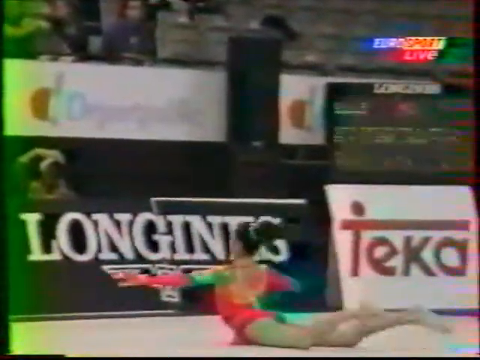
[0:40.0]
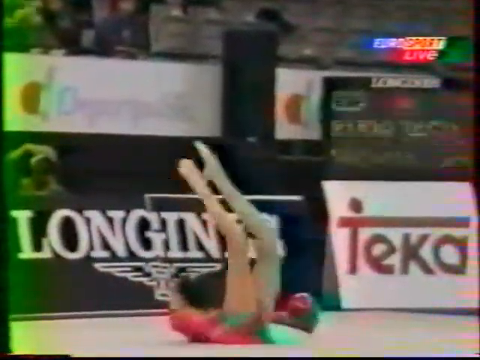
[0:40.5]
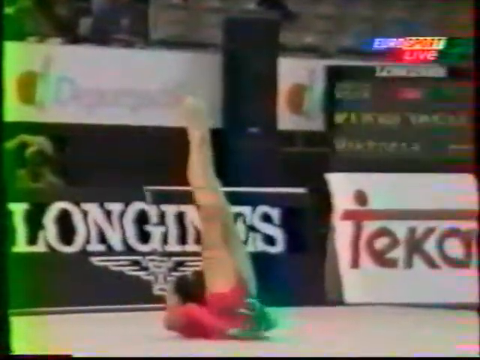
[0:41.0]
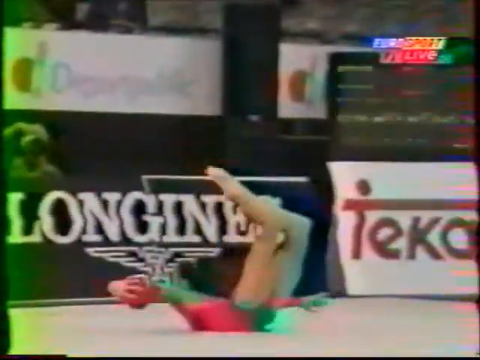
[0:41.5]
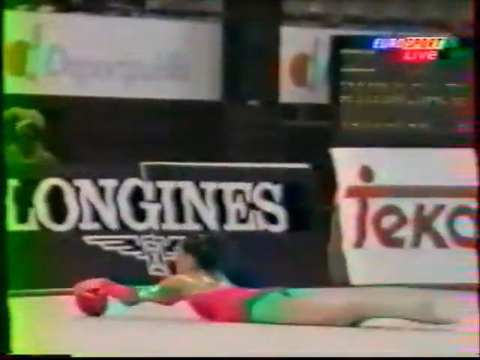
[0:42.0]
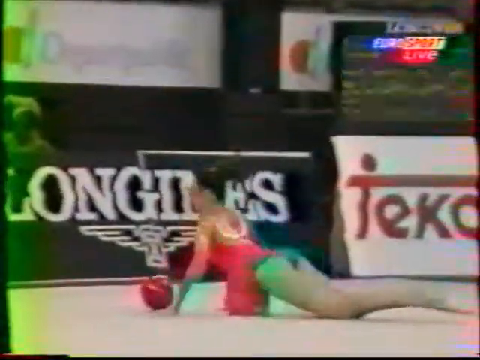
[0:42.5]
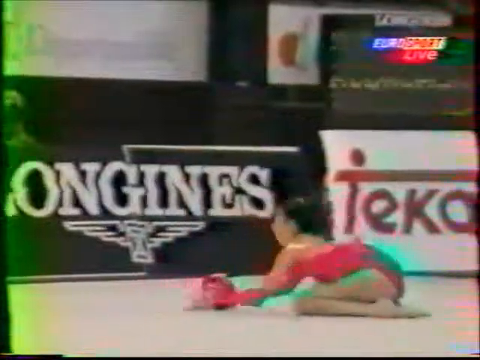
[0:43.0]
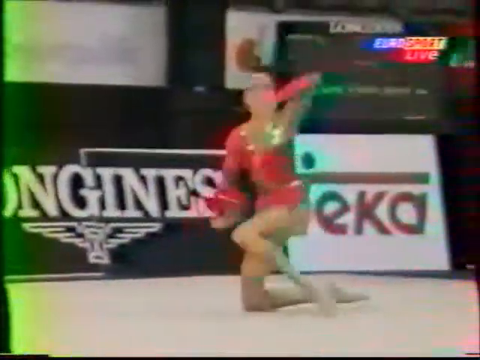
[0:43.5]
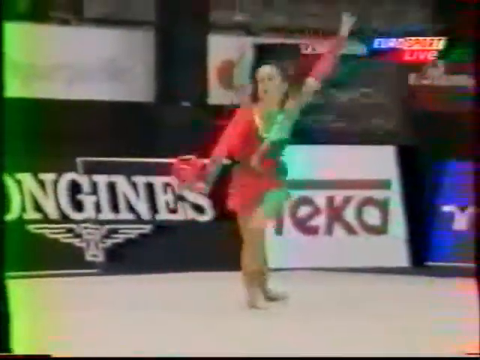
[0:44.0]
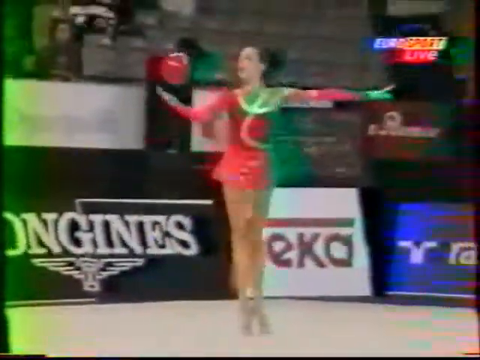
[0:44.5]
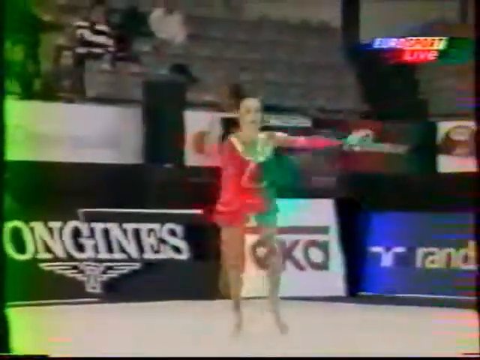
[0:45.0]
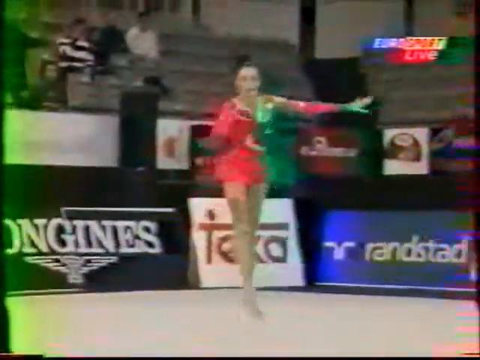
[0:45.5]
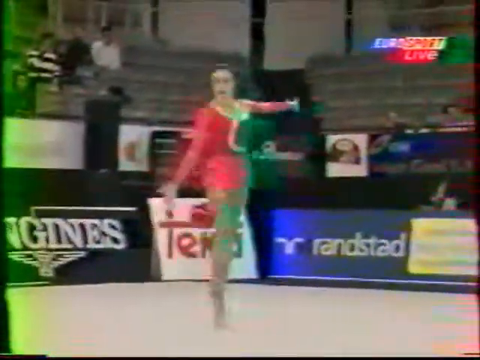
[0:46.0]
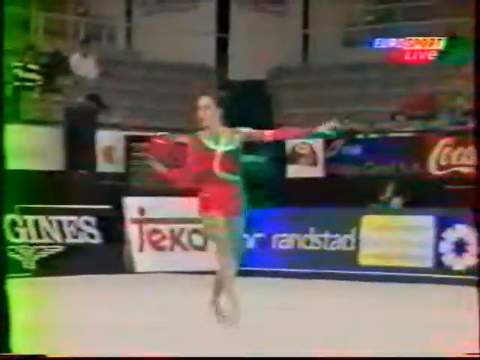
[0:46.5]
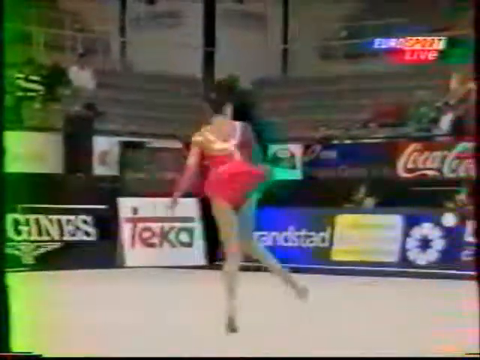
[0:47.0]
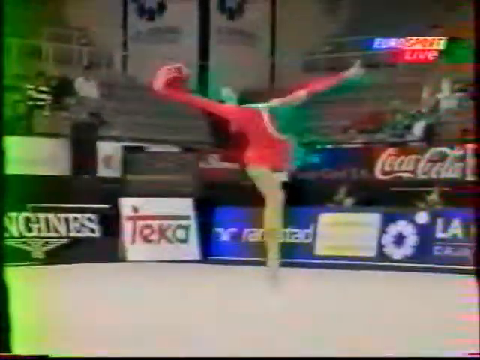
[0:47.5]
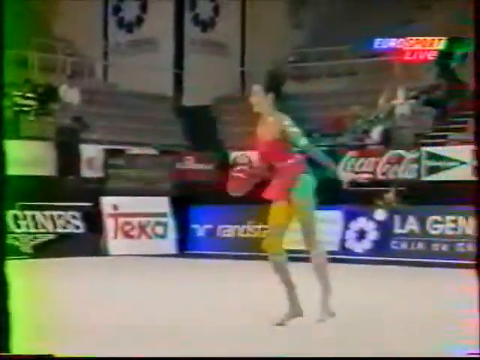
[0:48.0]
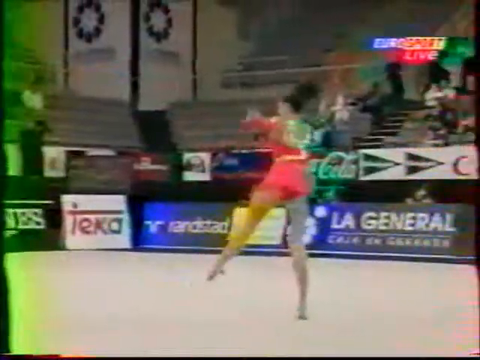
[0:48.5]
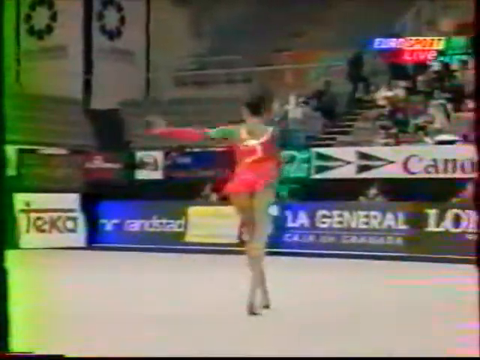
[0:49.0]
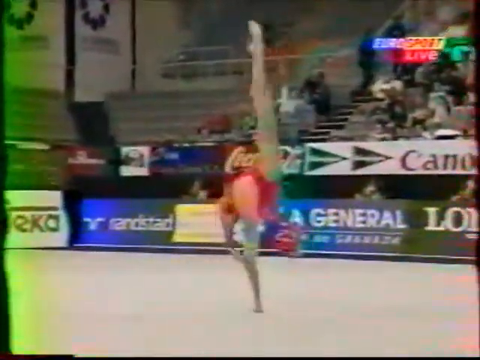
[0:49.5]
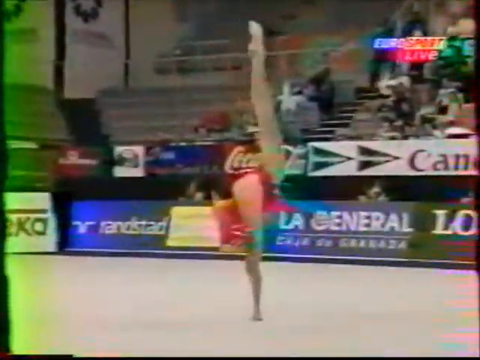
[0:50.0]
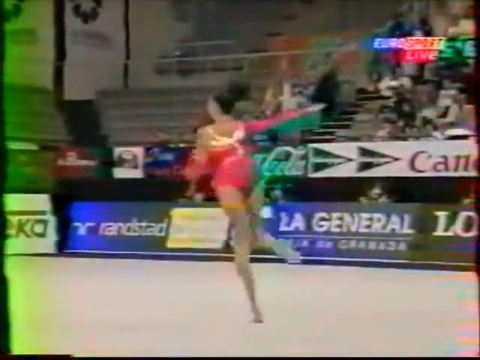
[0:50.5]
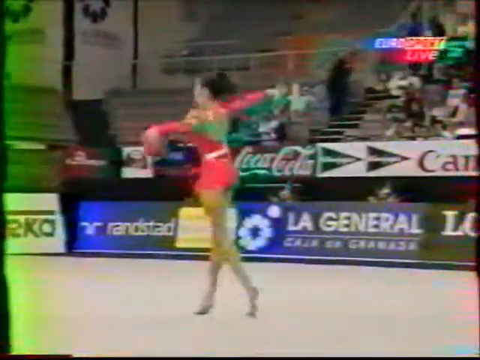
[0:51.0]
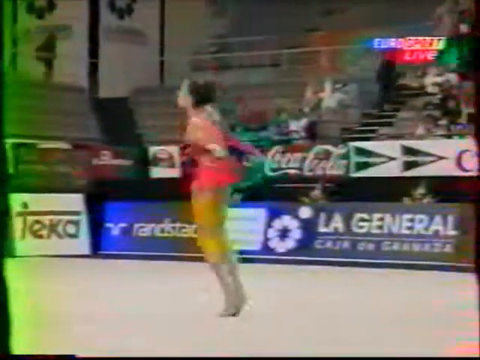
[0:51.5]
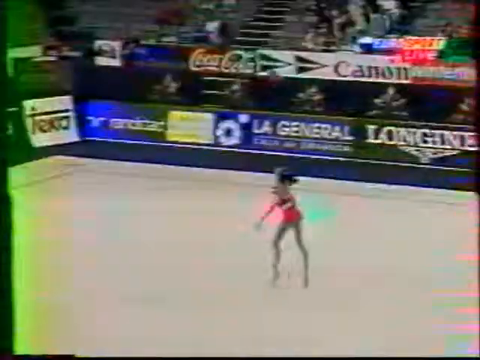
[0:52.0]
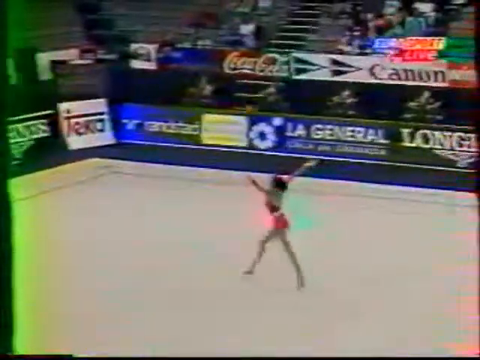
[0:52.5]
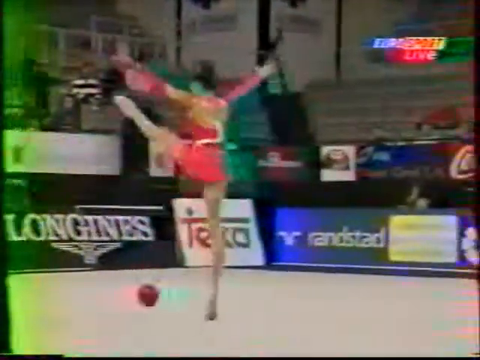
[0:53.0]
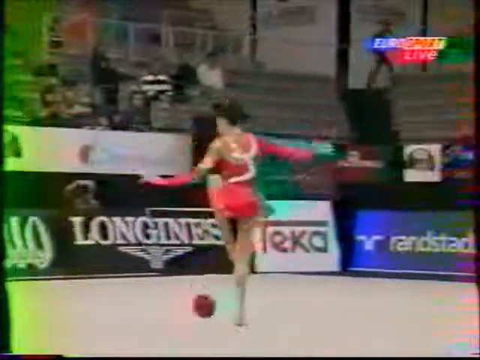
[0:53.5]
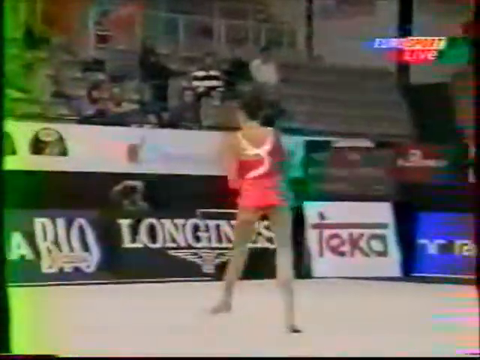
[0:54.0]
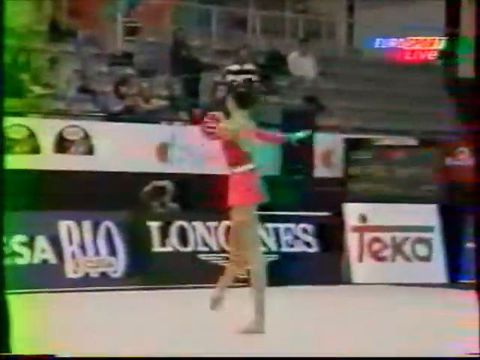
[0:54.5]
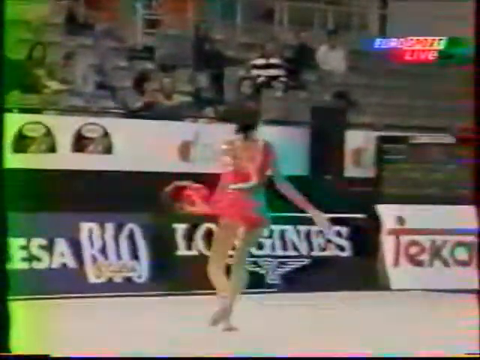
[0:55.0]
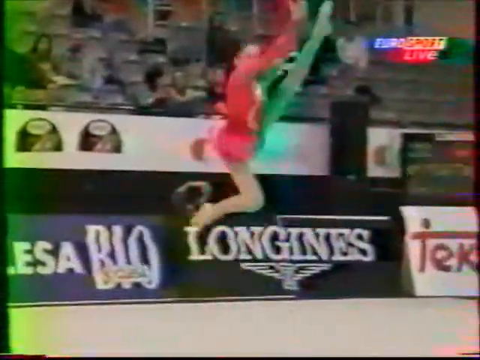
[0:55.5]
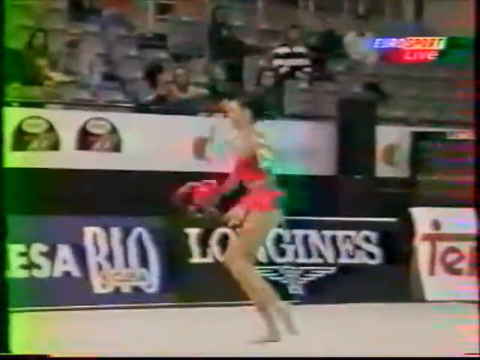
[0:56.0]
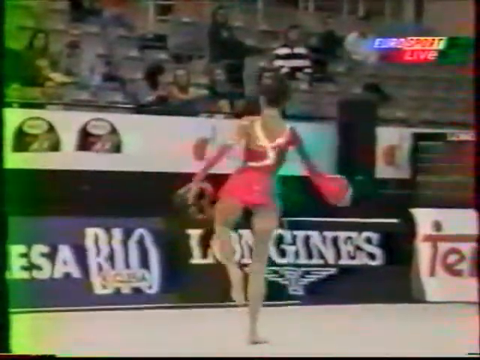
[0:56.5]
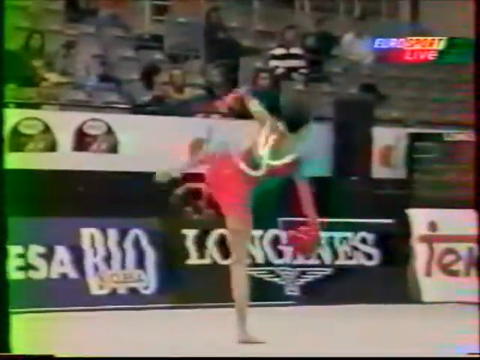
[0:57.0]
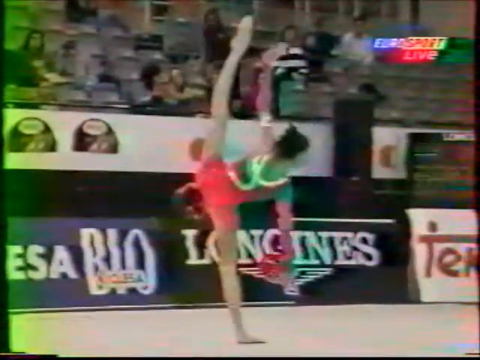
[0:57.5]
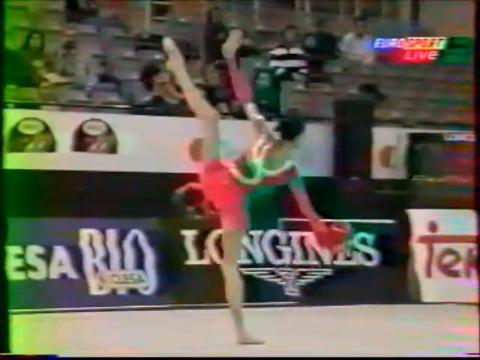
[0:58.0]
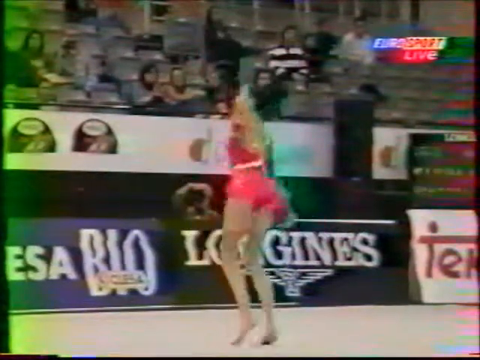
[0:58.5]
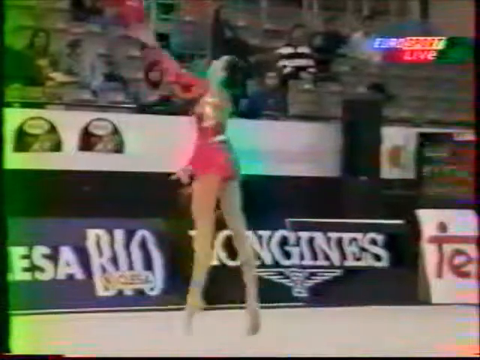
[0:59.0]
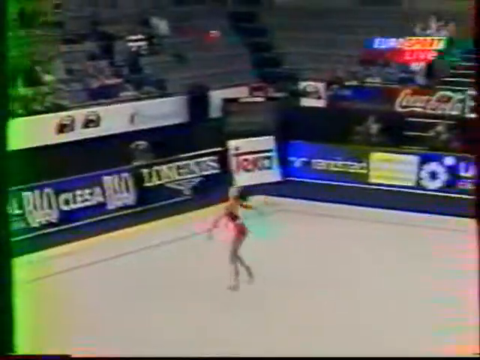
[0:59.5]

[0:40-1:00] A woman in a red outfit with black hair is on the floor holding a ball and moving it around her body. She slowly gets up, puts her hand in the air and starts moving forward. She bounces the ball, grabs it again and starts twirling and jumping around. She kicks one leg up in the air behind her, throws the ball over her head, puts her leg over the ball, hits it and grabs it again. She jumps up in the air, lifts her leg up in the air, throws the ball high and catches it. Advertisements are in the background, and a bunch of people in the stands are moving around and getting up, with a lot of empty seats. The video appears to be older, with a lot of grainy green textures. Eurosports Live appears in the top right corner.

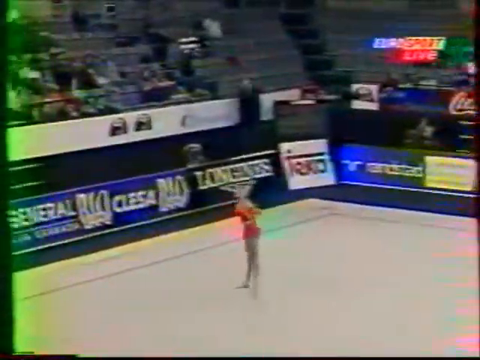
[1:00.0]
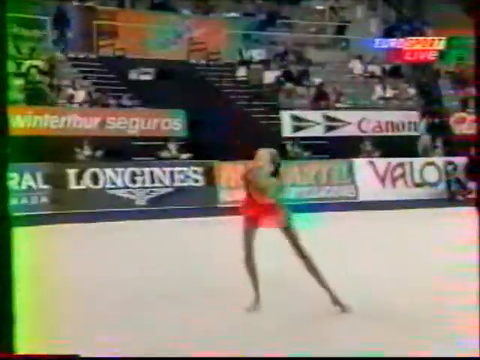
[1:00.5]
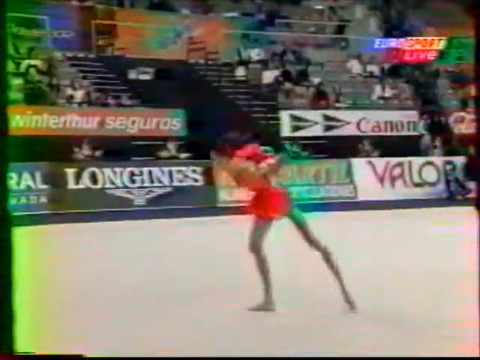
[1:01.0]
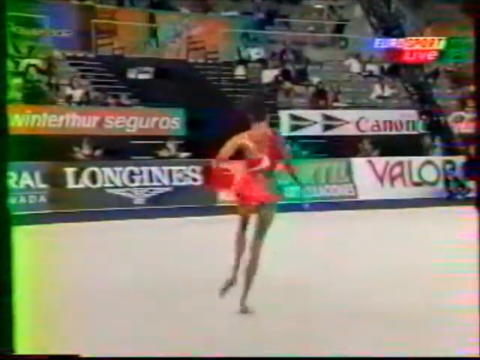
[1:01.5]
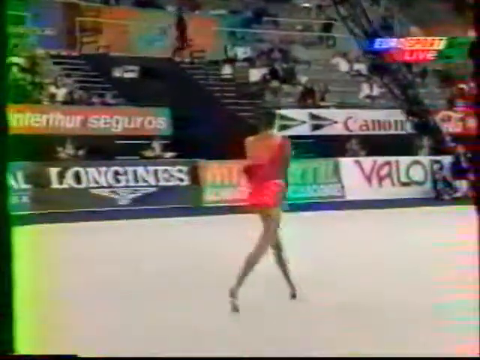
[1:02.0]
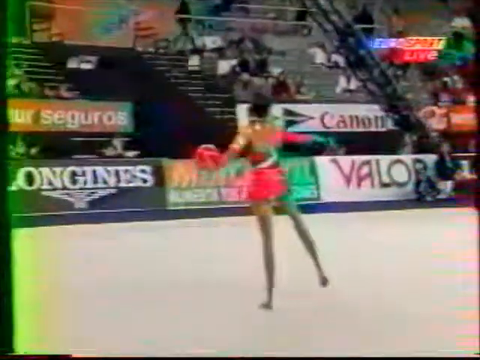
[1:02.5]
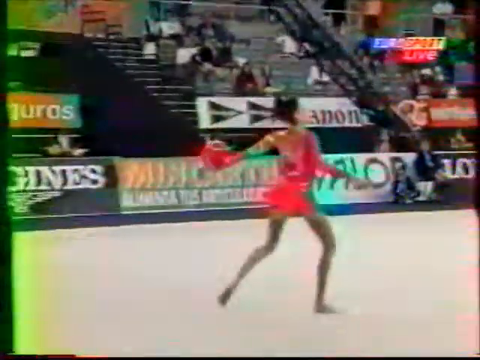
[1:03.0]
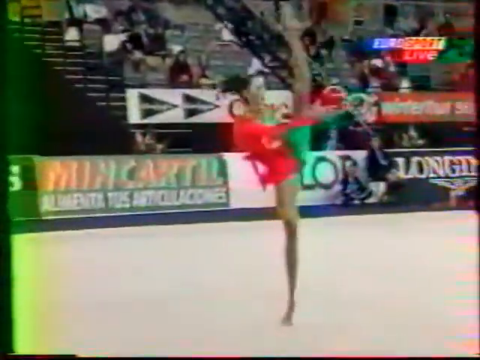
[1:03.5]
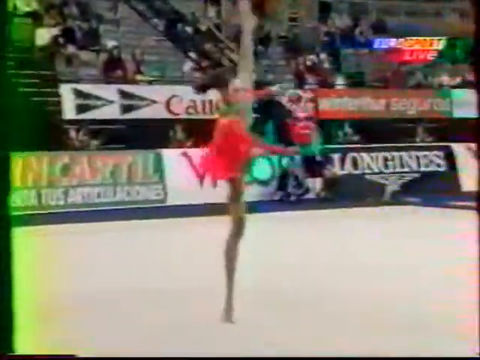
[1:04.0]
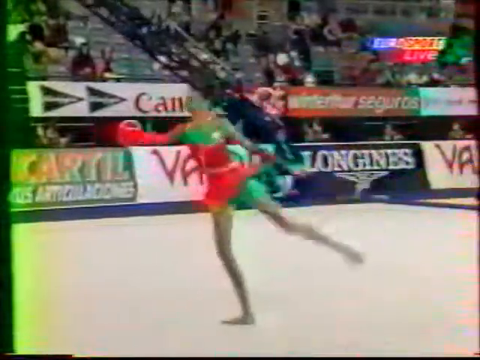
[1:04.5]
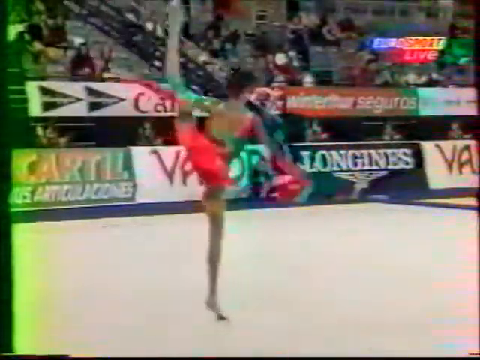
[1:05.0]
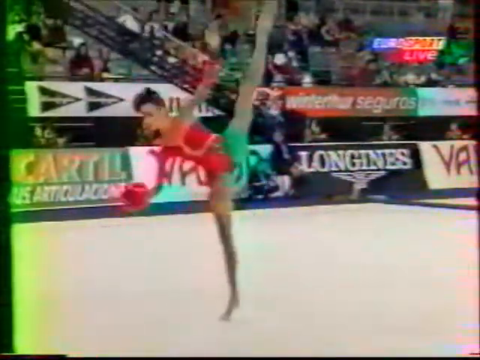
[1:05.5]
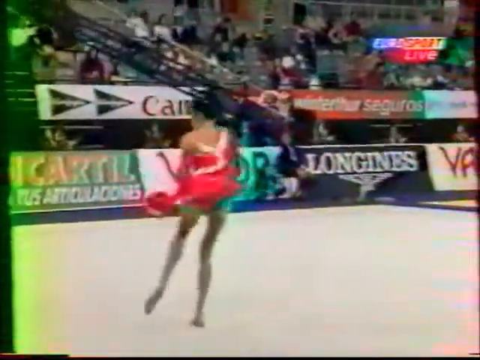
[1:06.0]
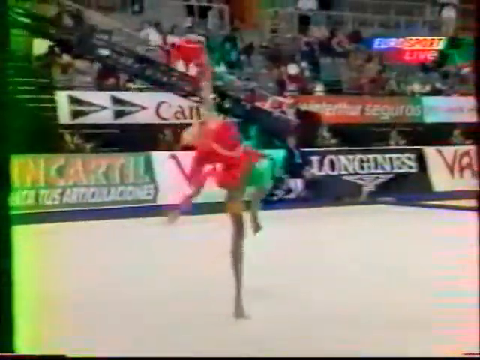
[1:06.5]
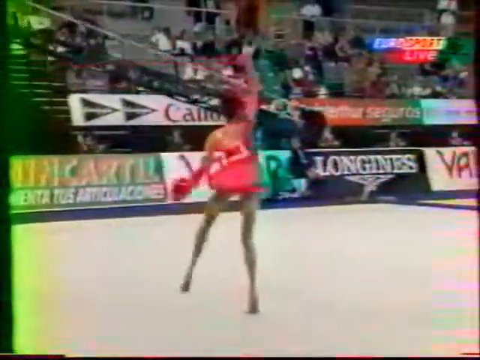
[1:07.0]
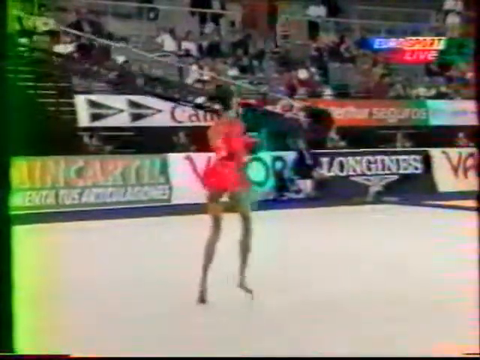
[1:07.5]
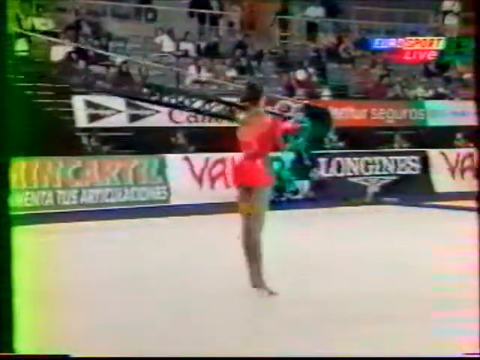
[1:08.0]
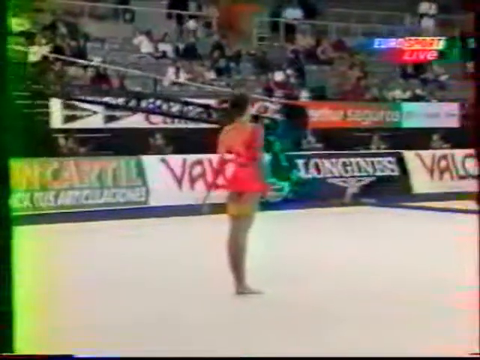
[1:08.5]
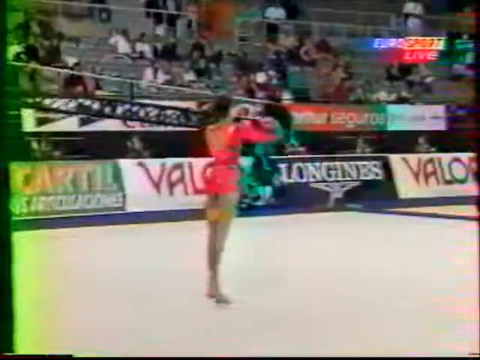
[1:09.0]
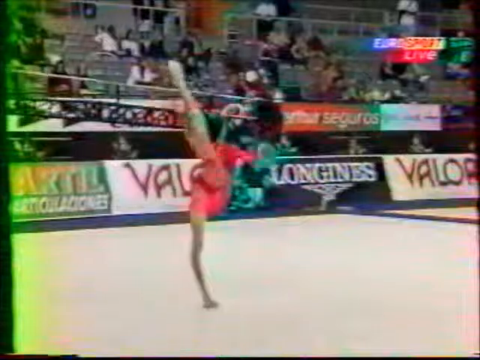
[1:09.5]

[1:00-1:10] A woman with black hair and a red outfit is standing in a stadium, holding a ball. In the background are various advertisements, including an ad for Coca-Cola and an ad for Canon, and seats where some people are sitting, with a lot of empty ones. There appears to be some sort of crane in the background. She catches the ball on her back, grabs it and pulls it forward, spins around with one leg up in the air, twirls around and lifts her leg up behind her back. Eurosports Live appears in the top right corner.